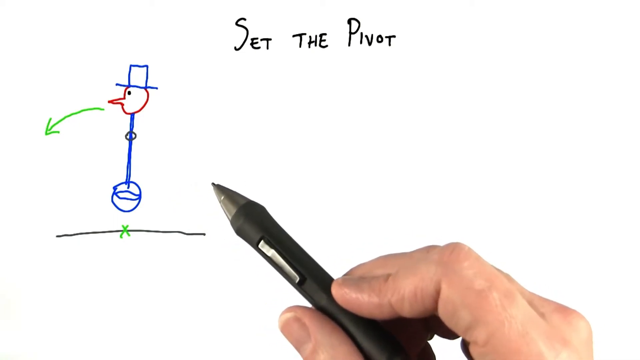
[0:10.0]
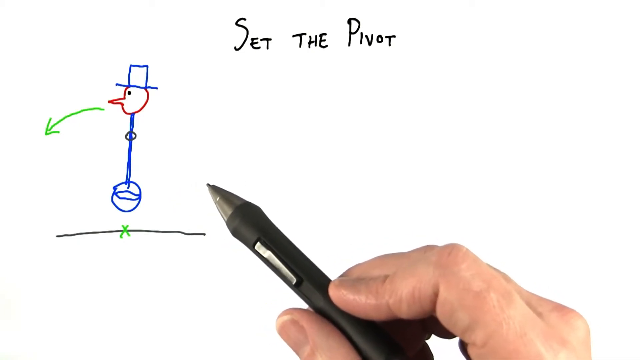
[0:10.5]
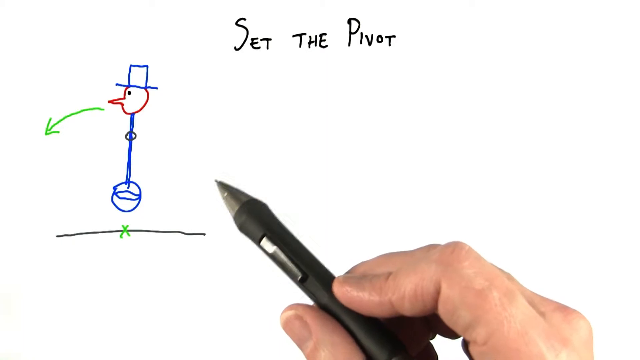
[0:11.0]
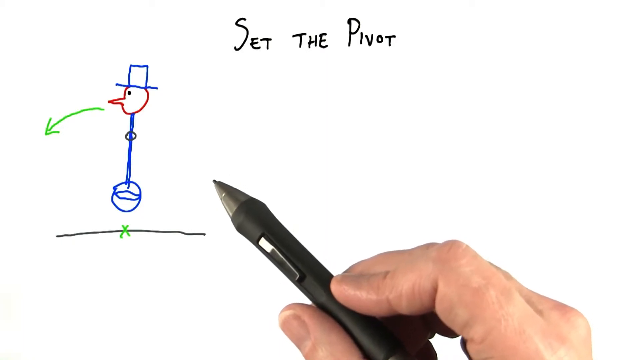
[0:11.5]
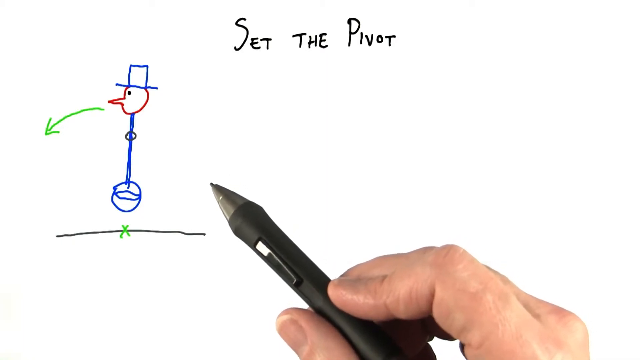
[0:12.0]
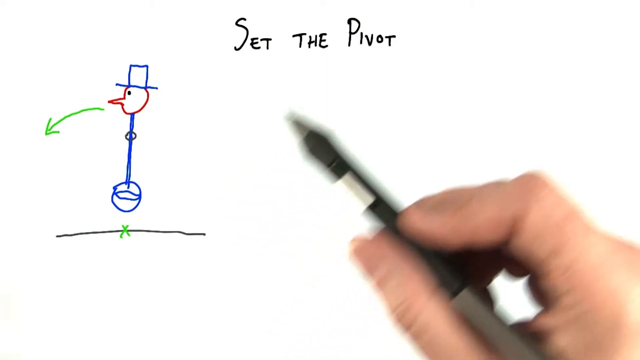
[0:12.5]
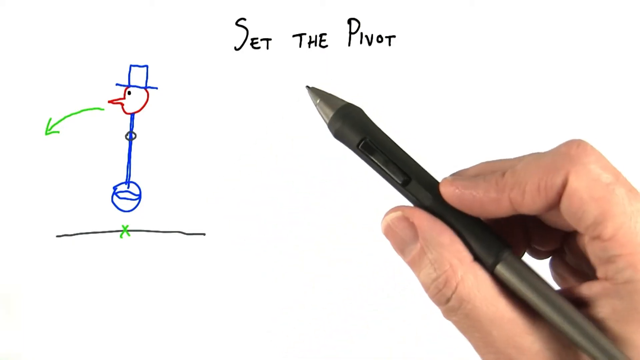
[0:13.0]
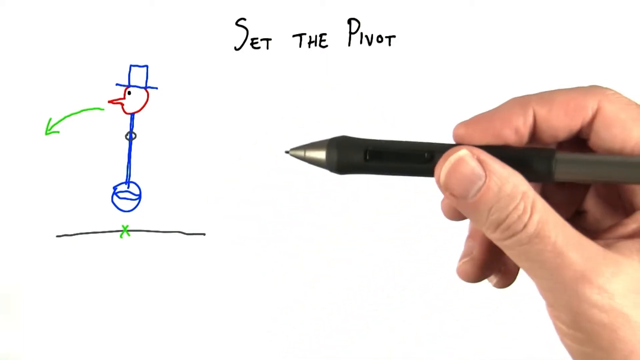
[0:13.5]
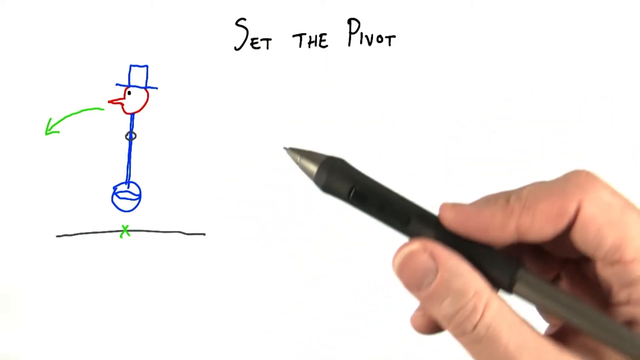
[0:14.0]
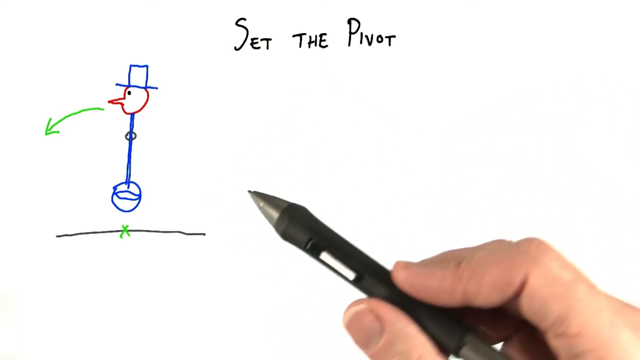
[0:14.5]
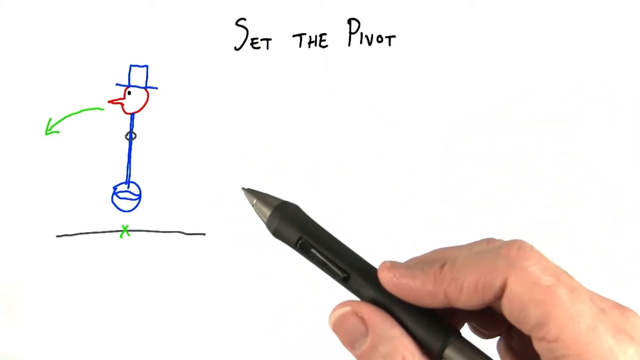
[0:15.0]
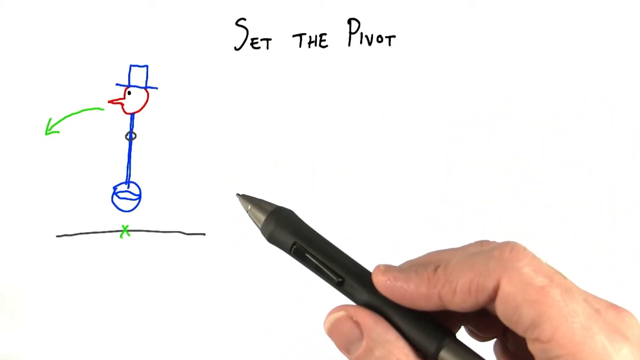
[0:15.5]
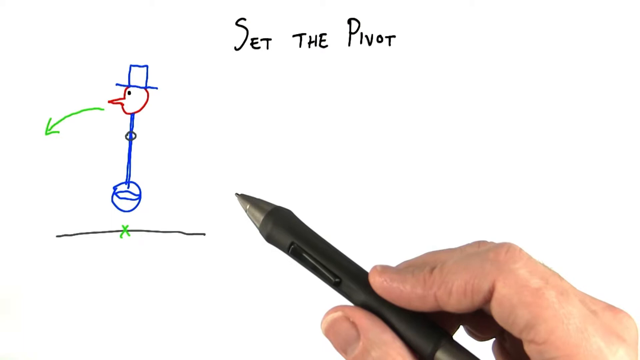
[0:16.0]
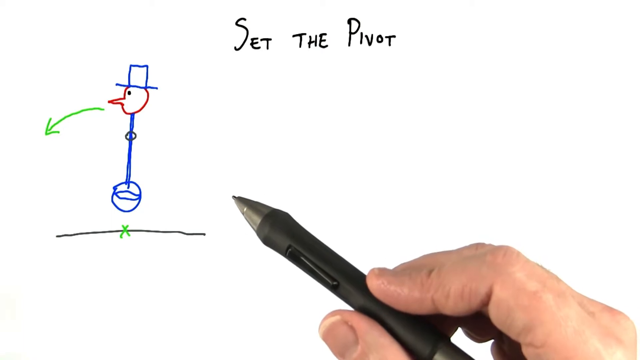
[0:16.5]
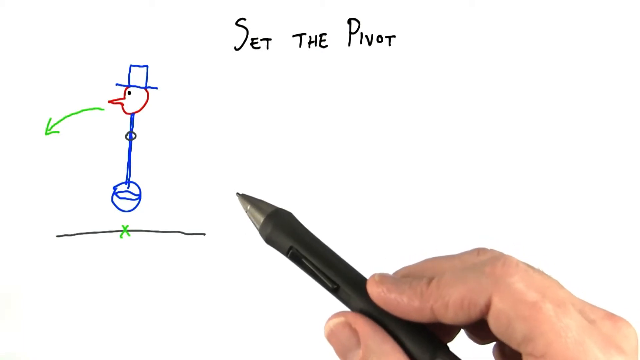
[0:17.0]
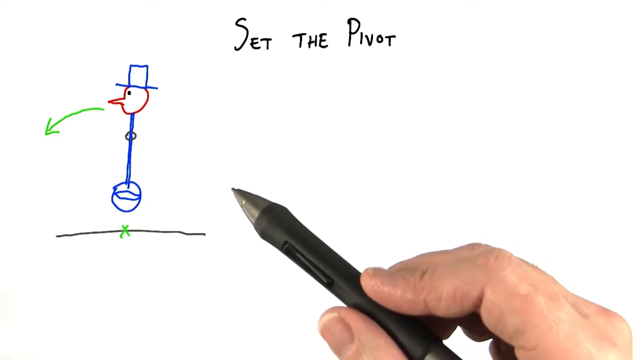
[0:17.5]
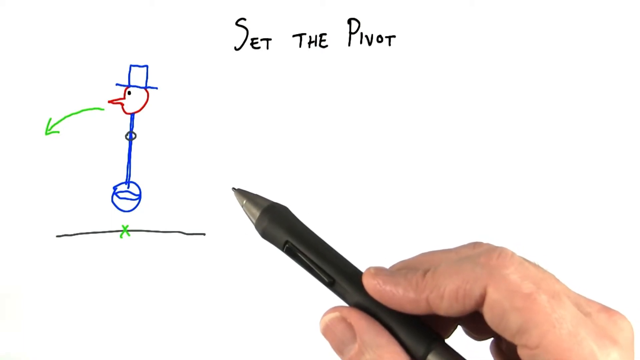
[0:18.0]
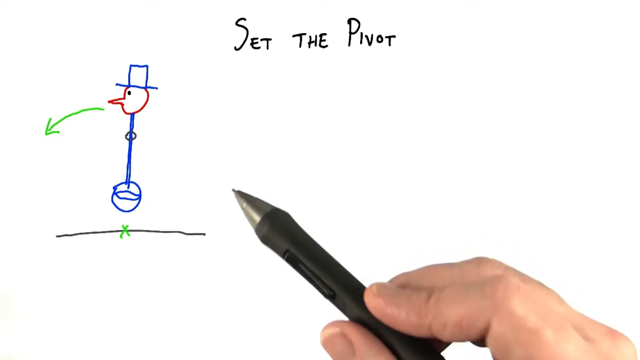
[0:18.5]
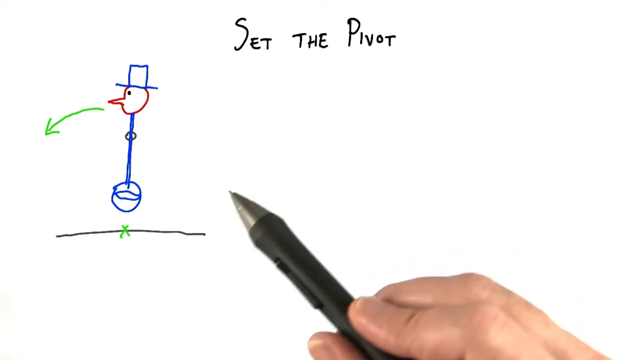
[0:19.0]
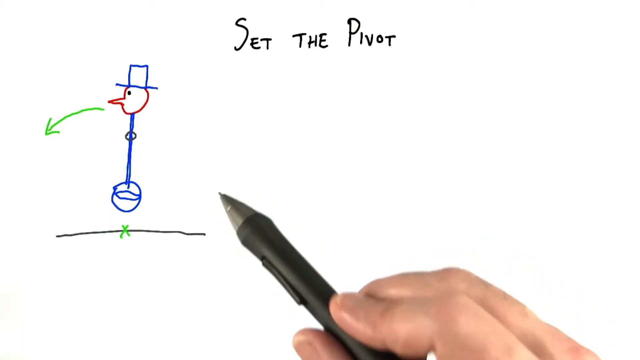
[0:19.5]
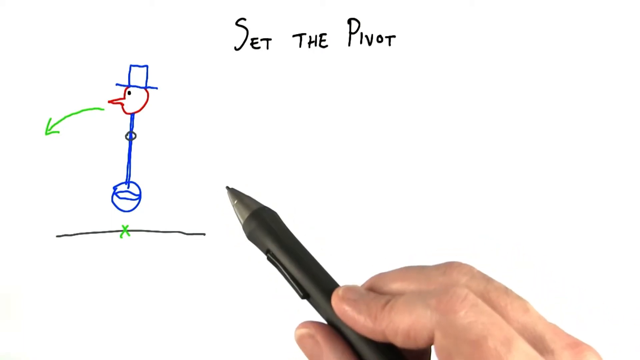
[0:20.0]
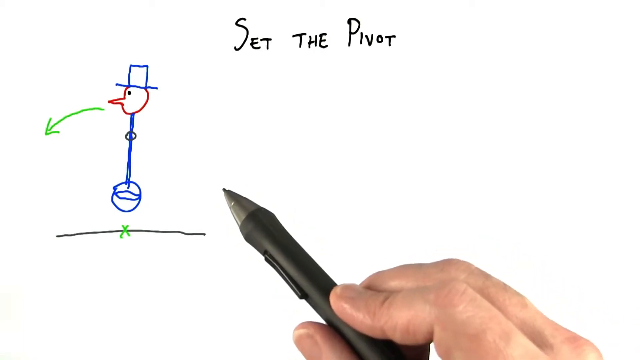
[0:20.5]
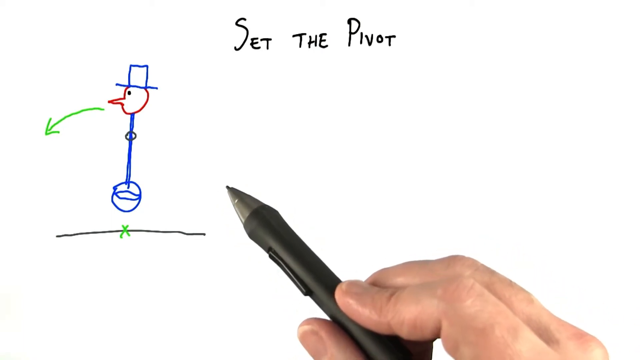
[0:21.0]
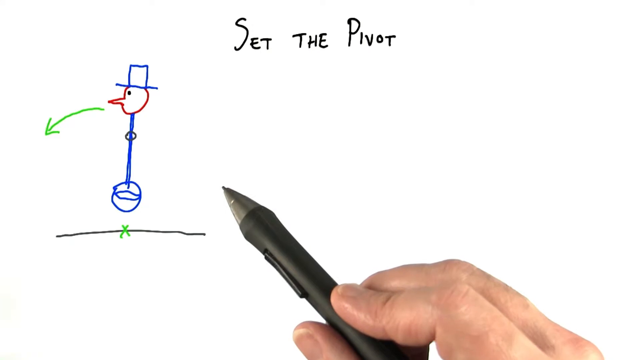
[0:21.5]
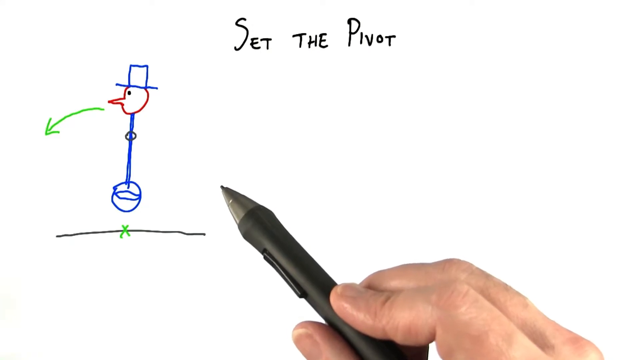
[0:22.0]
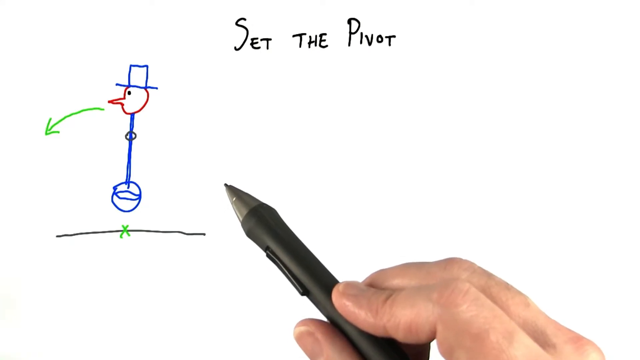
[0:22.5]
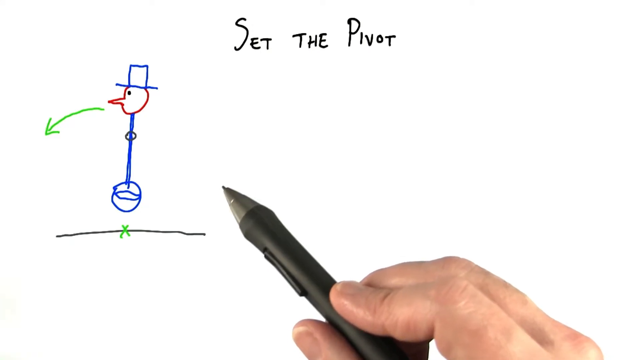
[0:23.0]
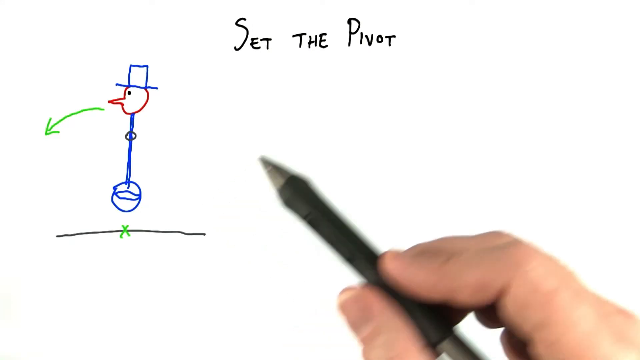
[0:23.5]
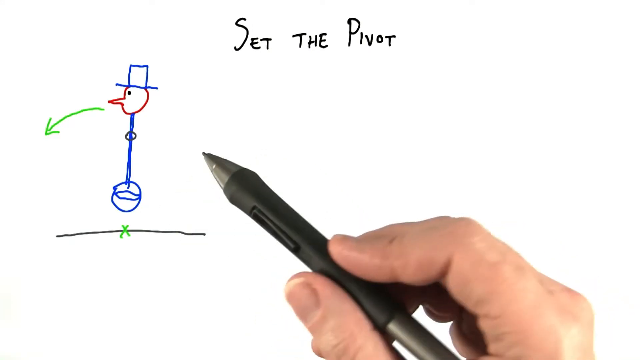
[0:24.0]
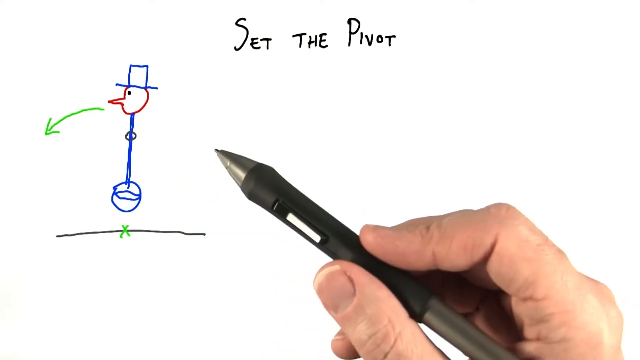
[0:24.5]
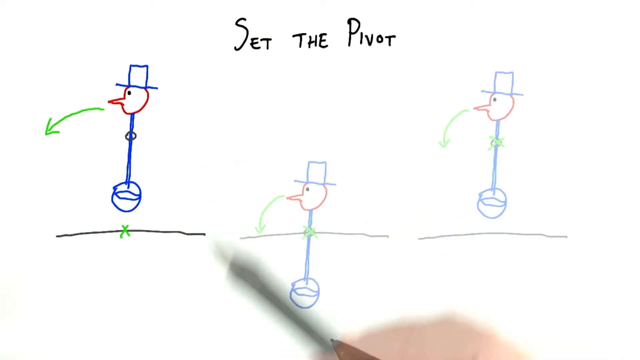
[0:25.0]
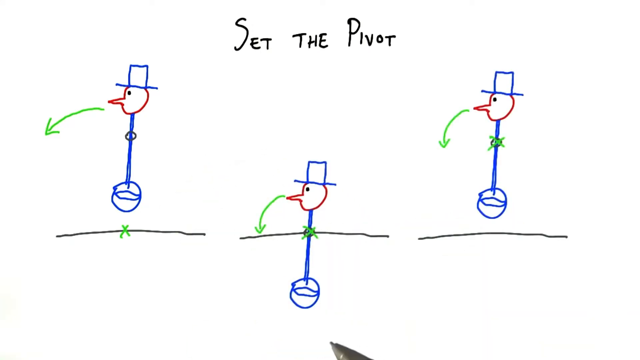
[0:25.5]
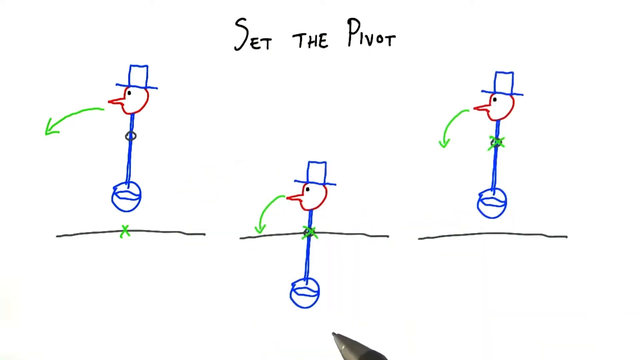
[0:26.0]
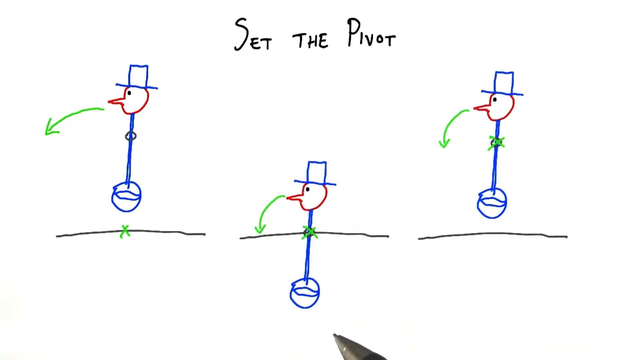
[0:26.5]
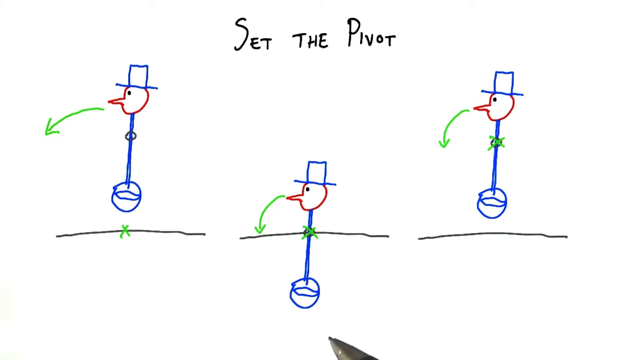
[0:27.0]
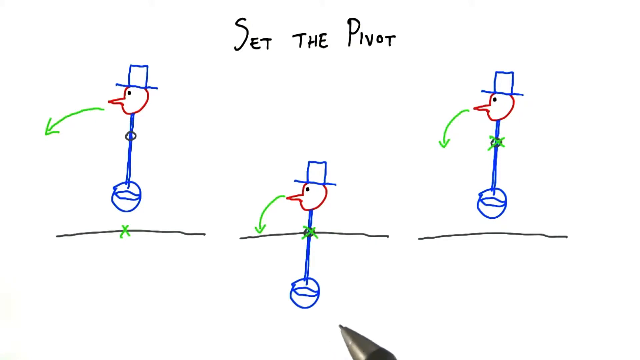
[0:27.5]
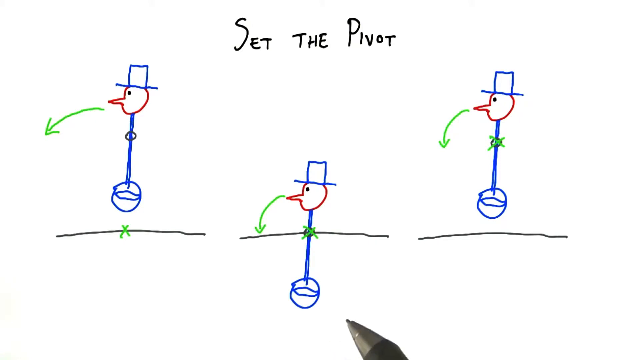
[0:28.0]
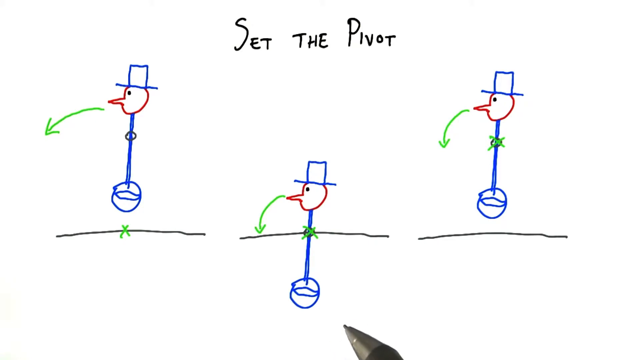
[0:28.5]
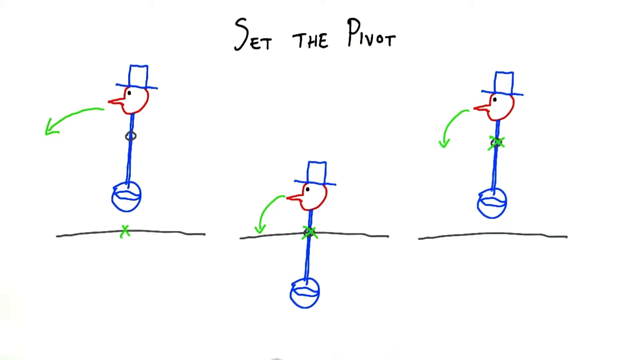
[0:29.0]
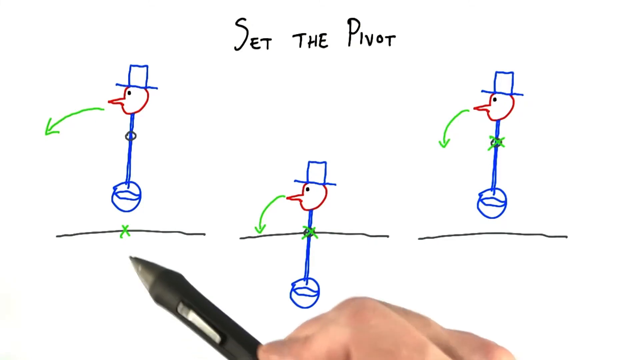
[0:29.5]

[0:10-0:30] The tutorial on setting the pivot continues. There is one stickman on the left, and the user points at various parts of its body with a black pen; he seems to be explaining something. He then starts drawing a second stickman in the center of the screen with the same characteristics, except that instead of a black line under it, as with the first stickman, the second stickman's black line is slightly above its chest. He then draws a third stickman, also the same: it wears a blue hat, has a round red face, and has an arrow pointing from its mouth. The third stickman's black line is positioned exactly where the first stickman's line is. It looks like the middle stickman is floating below its black line, while the other two stickmen are floating above theirs.